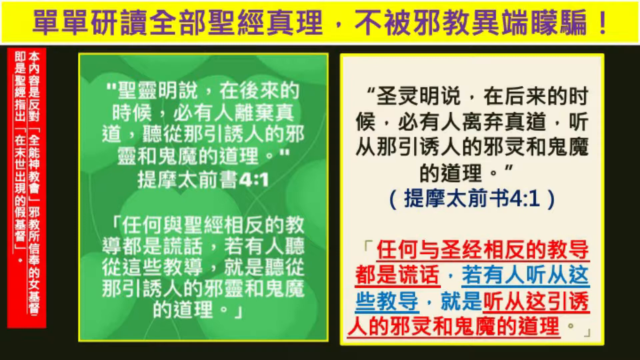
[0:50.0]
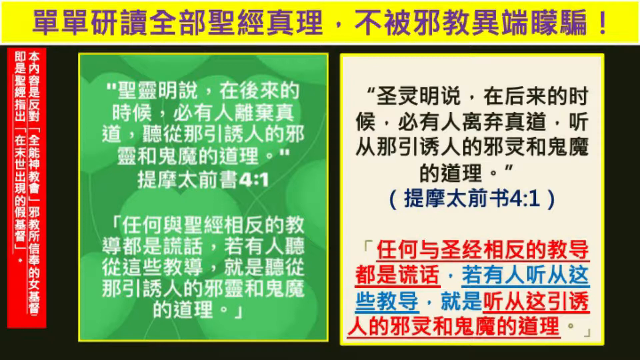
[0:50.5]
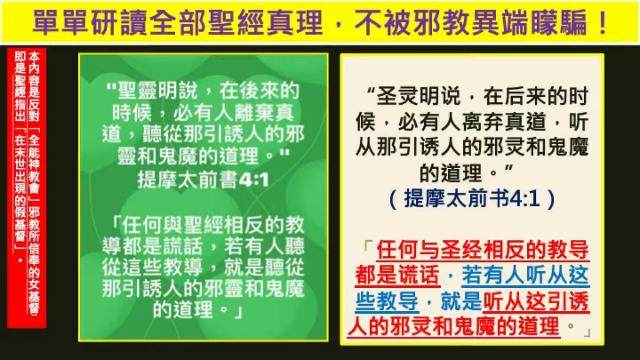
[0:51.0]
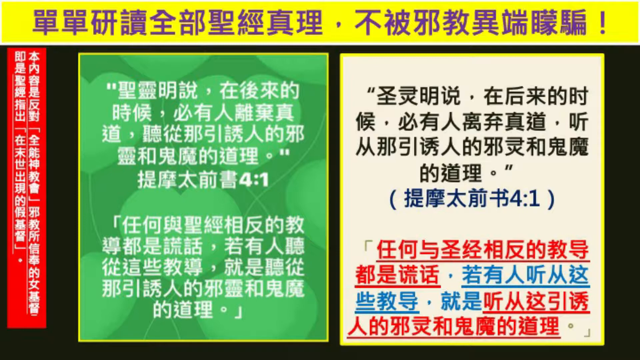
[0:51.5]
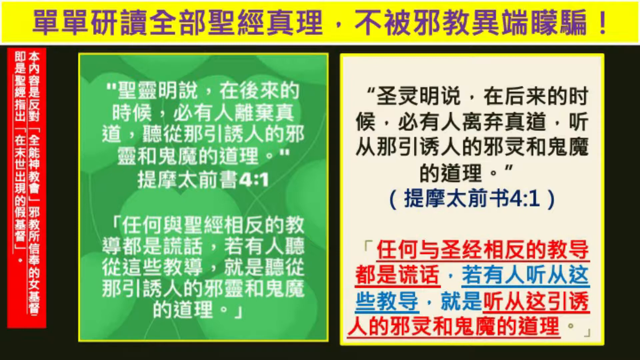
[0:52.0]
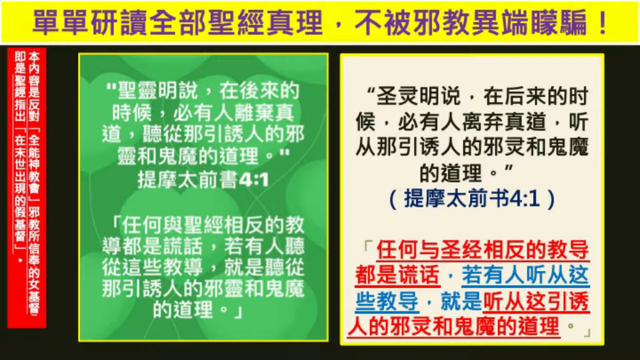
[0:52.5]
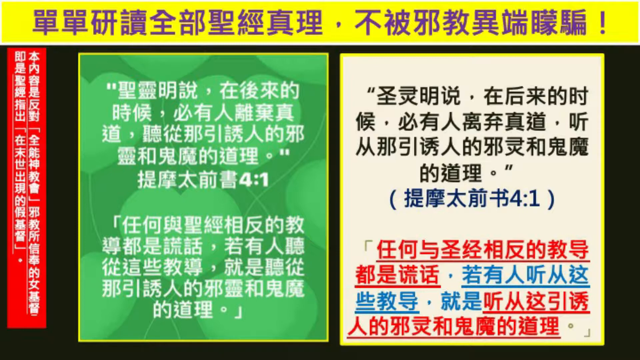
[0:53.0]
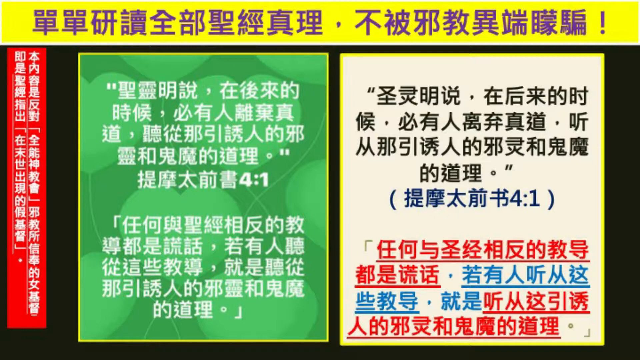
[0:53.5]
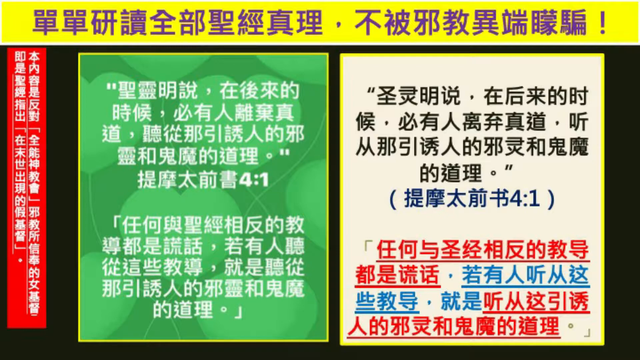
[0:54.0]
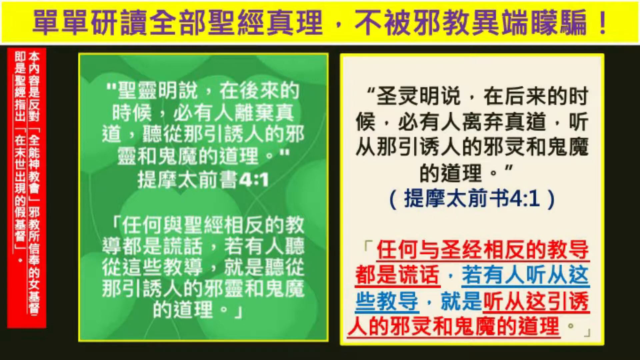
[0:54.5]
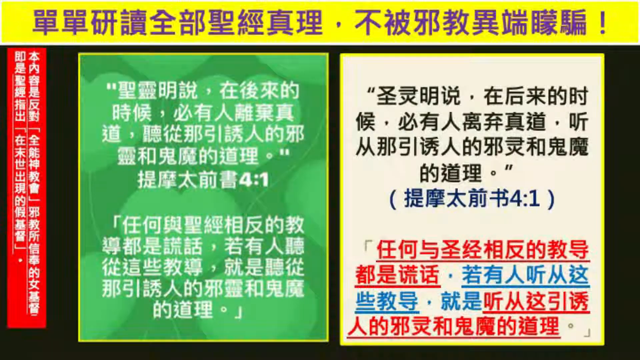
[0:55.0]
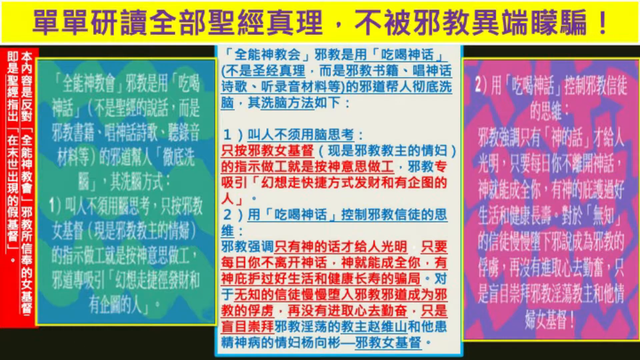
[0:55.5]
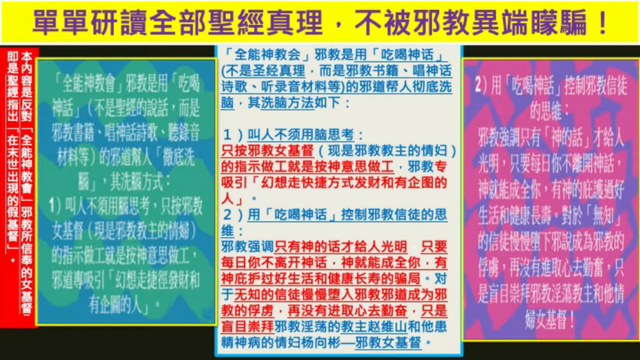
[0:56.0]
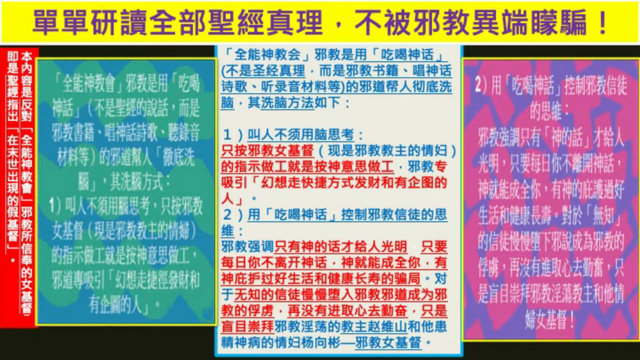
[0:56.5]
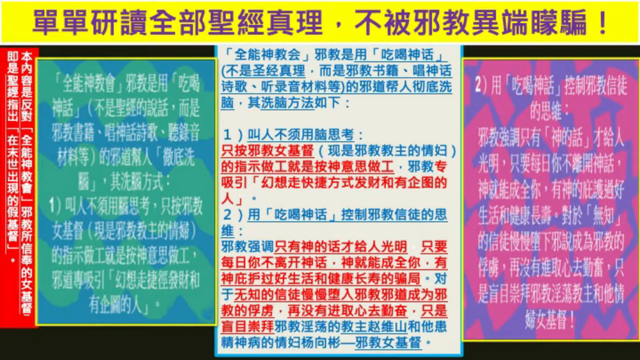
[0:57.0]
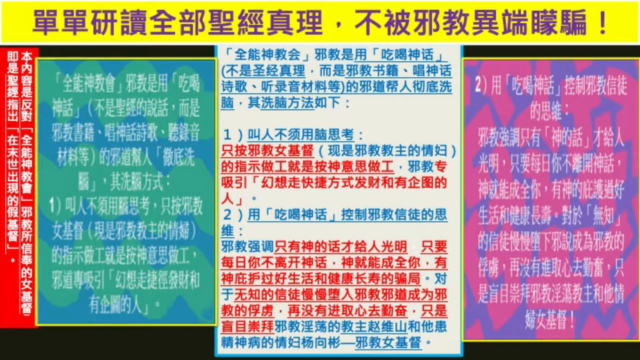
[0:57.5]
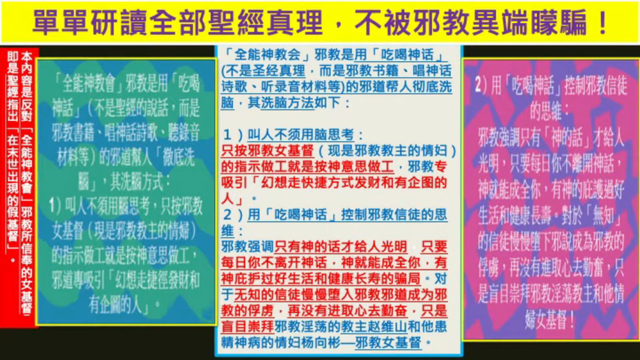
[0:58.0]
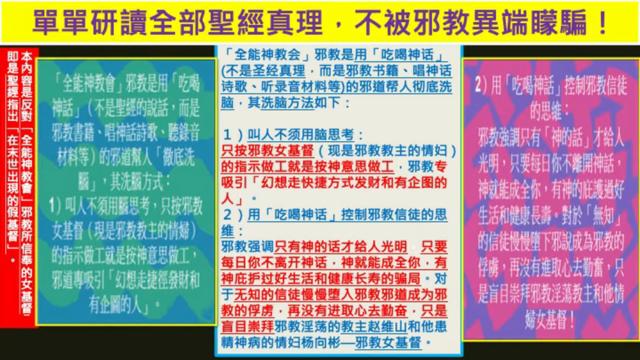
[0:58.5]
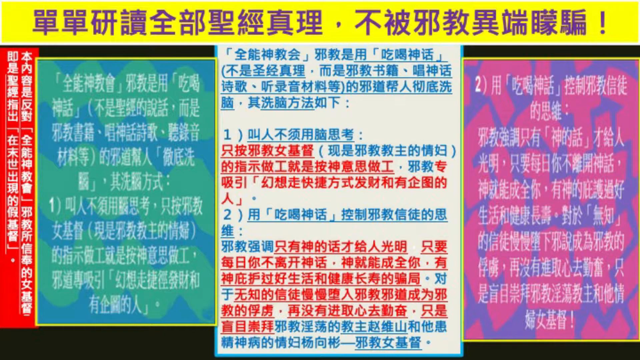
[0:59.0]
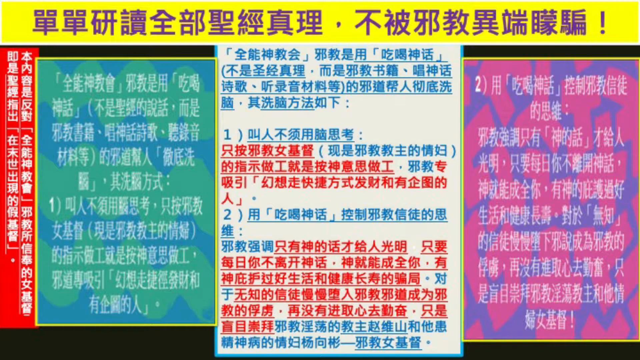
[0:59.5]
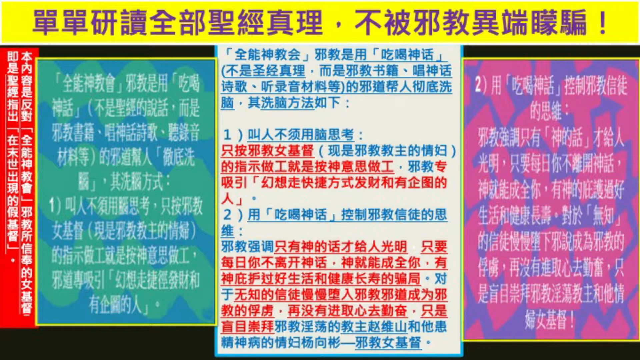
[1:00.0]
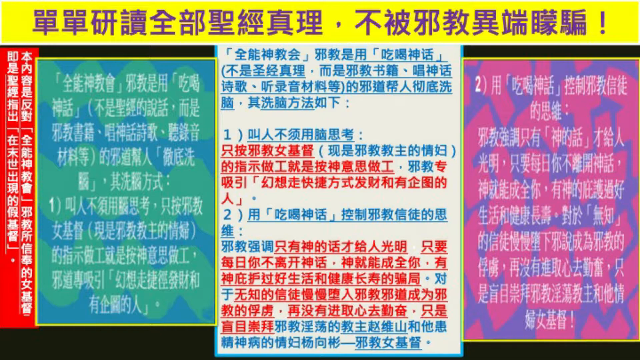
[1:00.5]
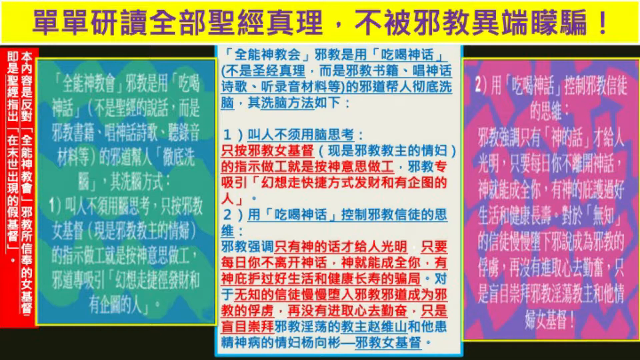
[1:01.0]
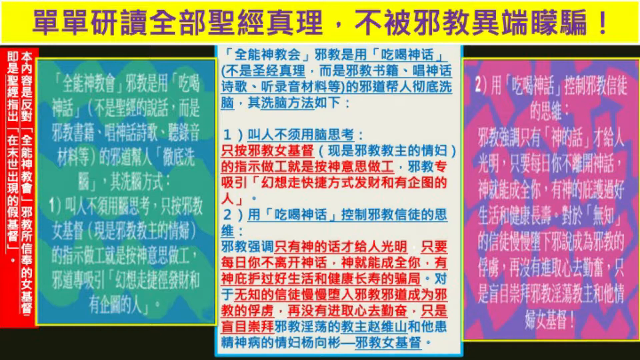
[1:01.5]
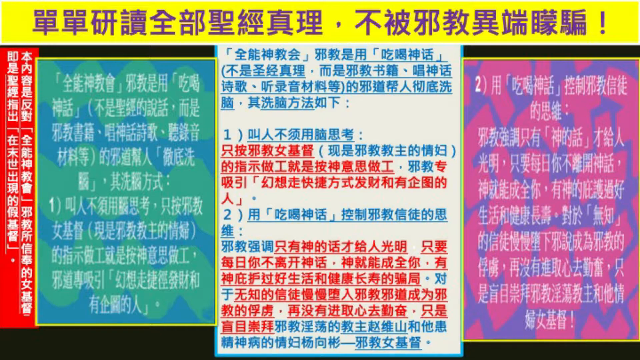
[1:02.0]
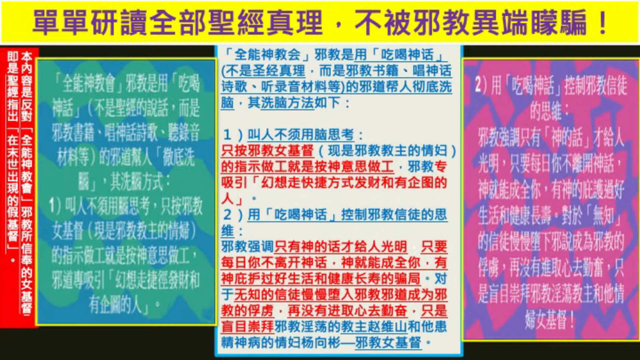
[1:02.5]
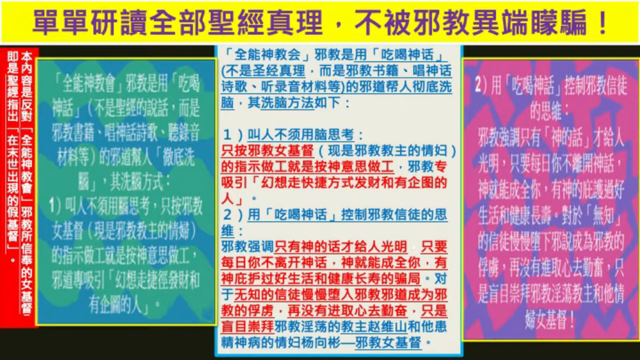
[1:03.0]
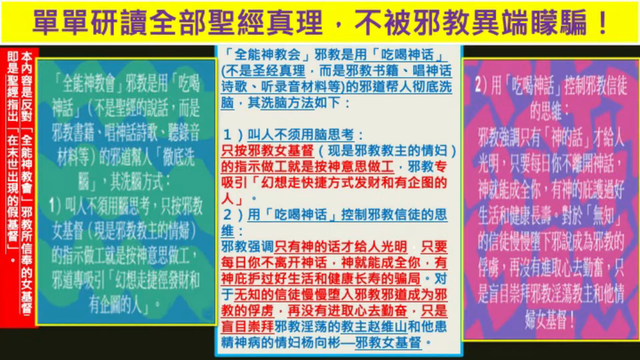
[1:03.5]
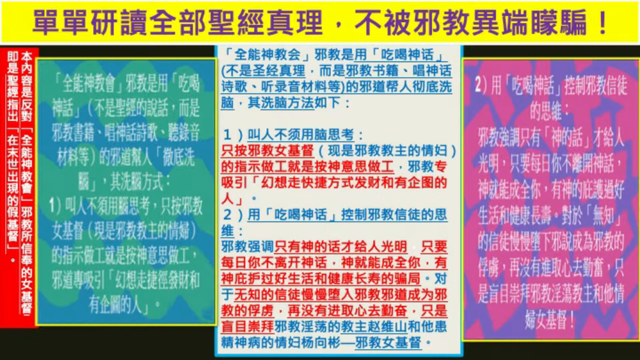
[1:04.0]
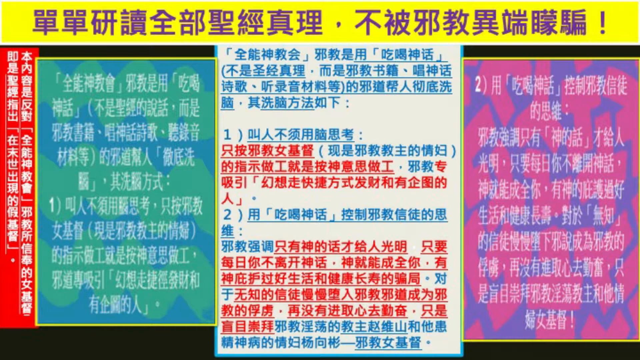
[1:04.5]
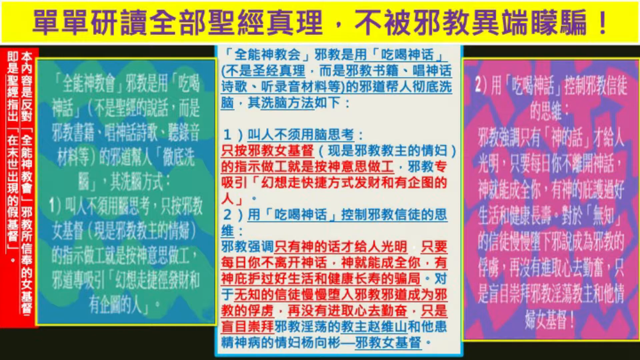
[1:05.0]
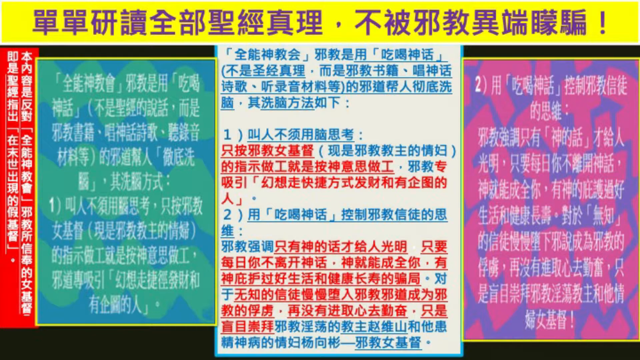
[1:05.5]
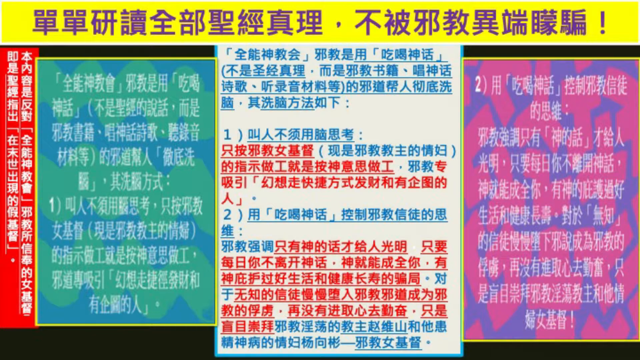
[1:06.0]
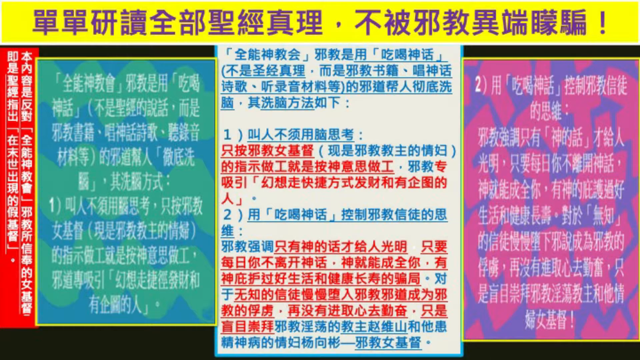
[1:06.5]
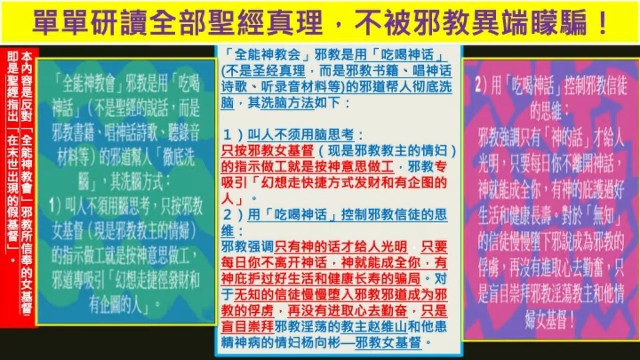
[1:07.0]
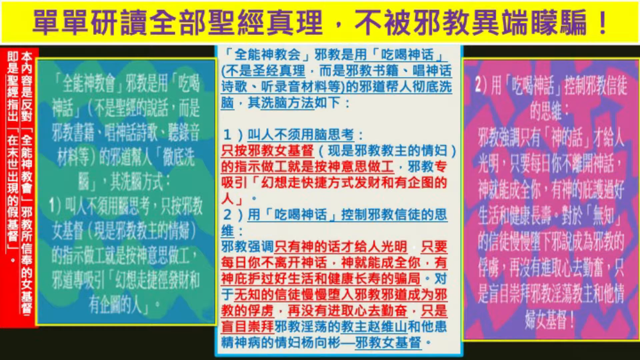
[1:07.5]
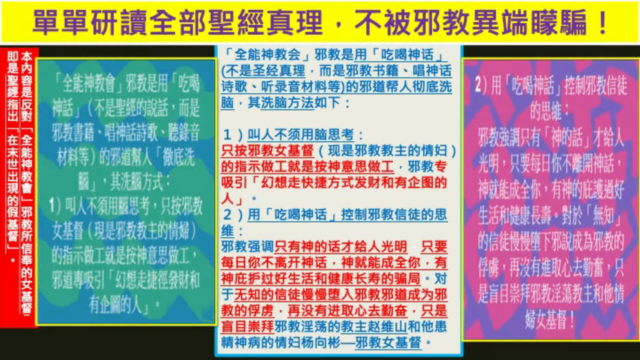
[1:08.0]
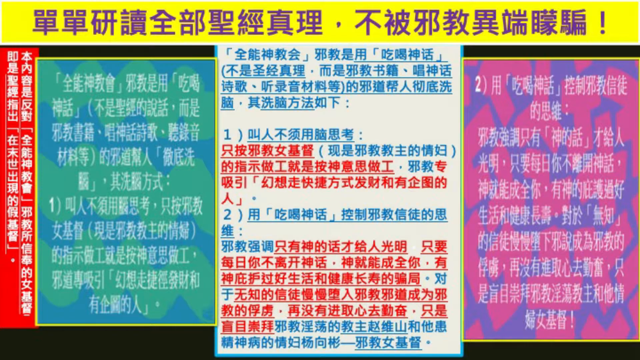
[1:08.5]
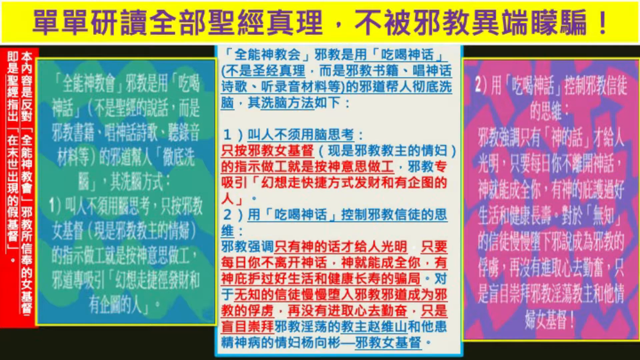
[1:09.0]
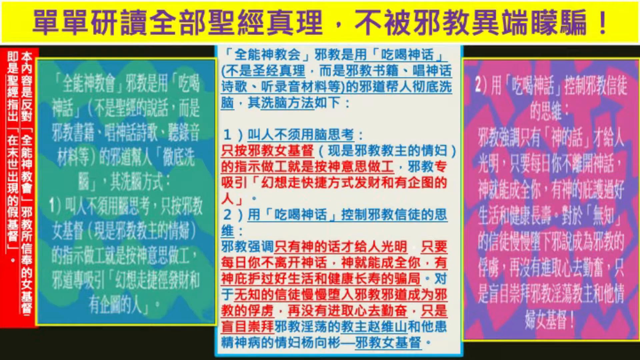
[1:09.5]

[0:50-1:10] A page has a yellow bar across the top with purple Asian lettering. To the left are two red banners with white lettering, and the background is black. On the left side is a page with a green background and white lettering; the right side has a white background with black, blue and red lettering, also in Asian writing. Another page follows with the same yellow banner on top, the same red on the left, blue and green on the left, blue and red on a white background in the middle, and purple and pink with white lettering on the right. These pages are full of writing that cannot be understood, though it looks like it is saying something important. Then a picture of the Bible appears with the word "distortion".